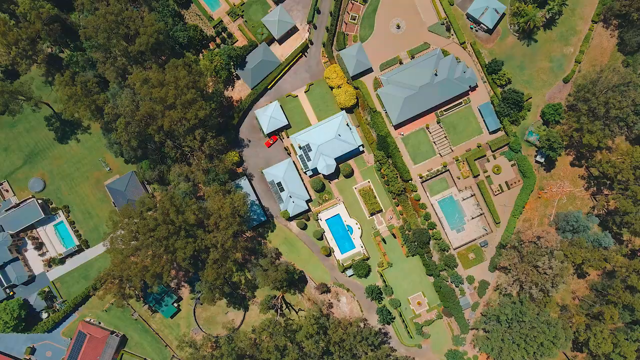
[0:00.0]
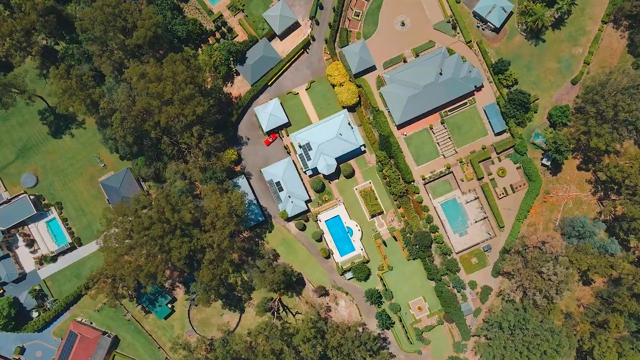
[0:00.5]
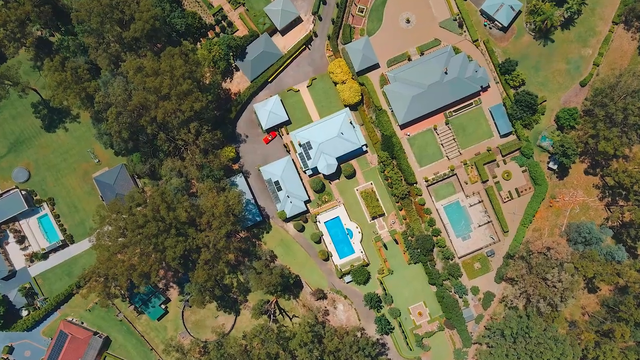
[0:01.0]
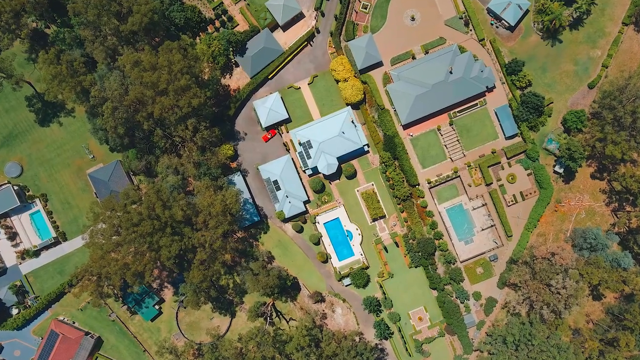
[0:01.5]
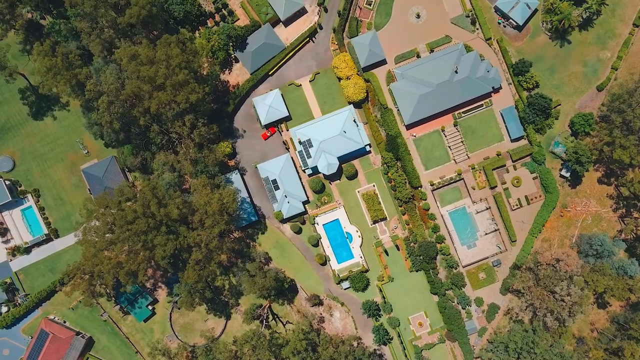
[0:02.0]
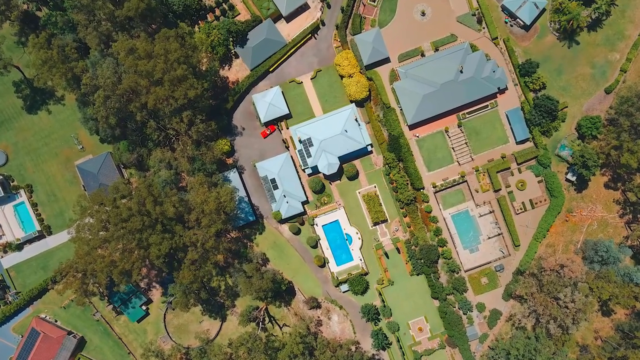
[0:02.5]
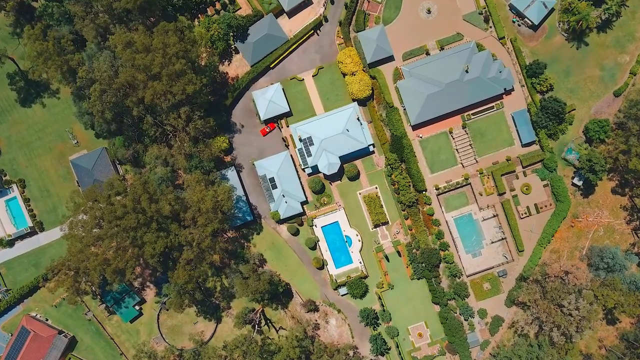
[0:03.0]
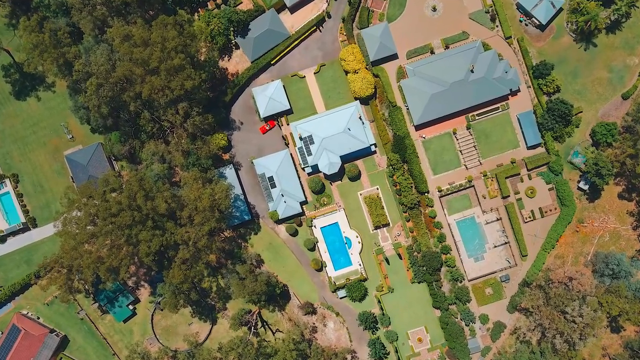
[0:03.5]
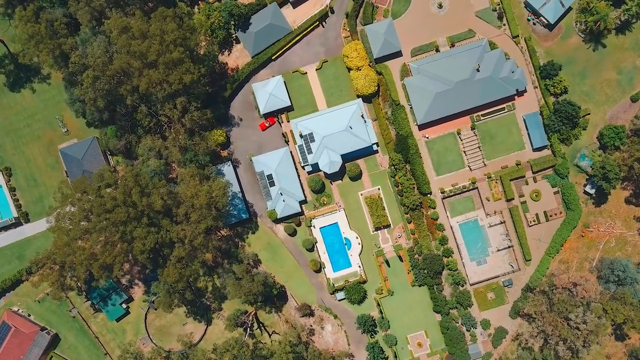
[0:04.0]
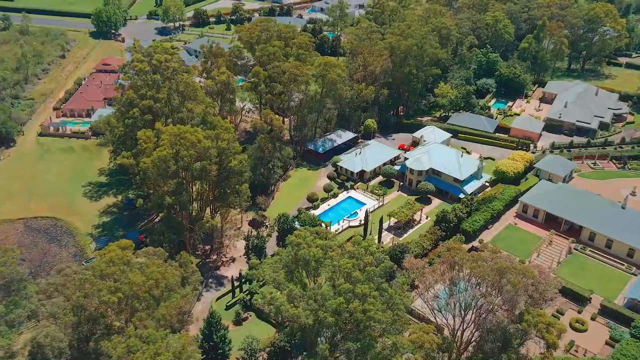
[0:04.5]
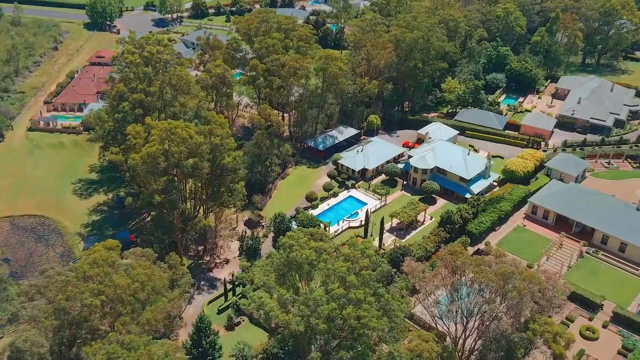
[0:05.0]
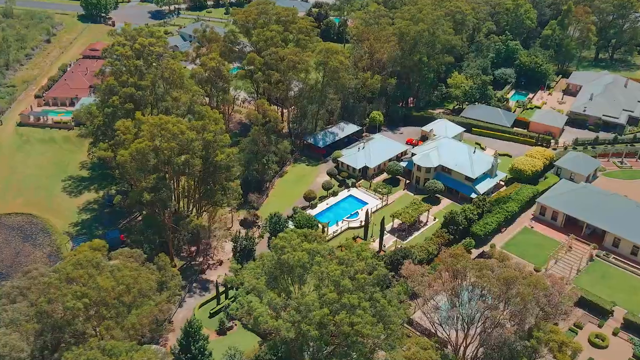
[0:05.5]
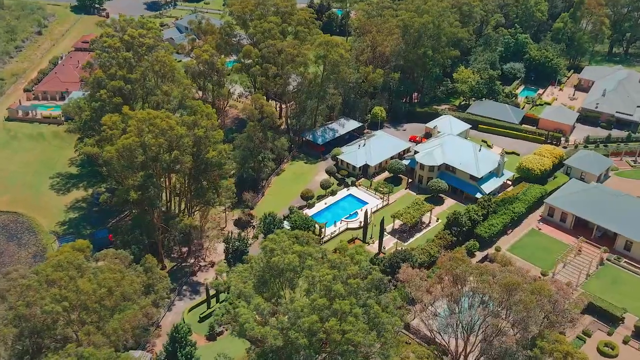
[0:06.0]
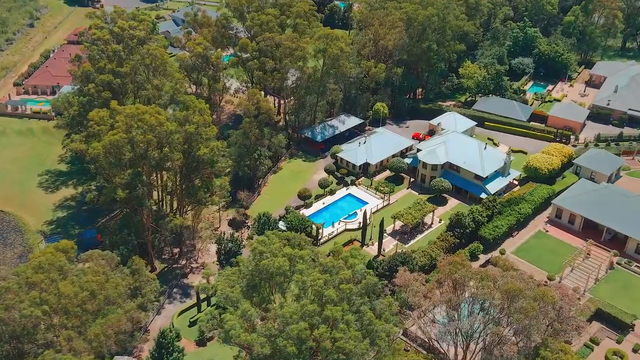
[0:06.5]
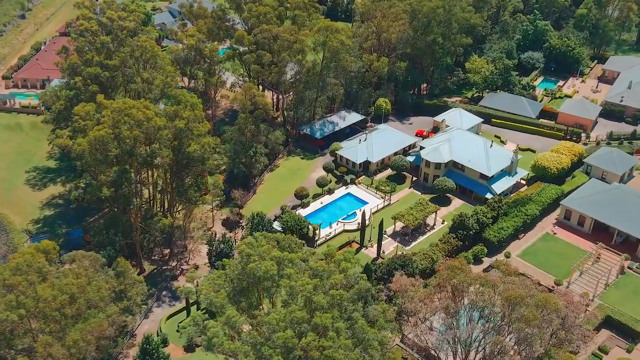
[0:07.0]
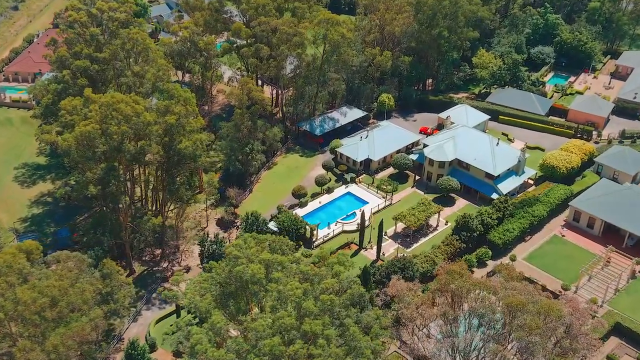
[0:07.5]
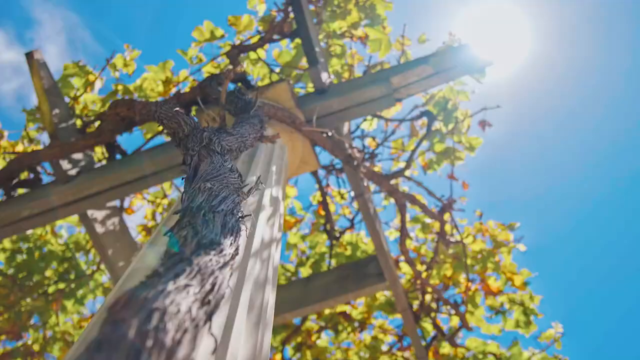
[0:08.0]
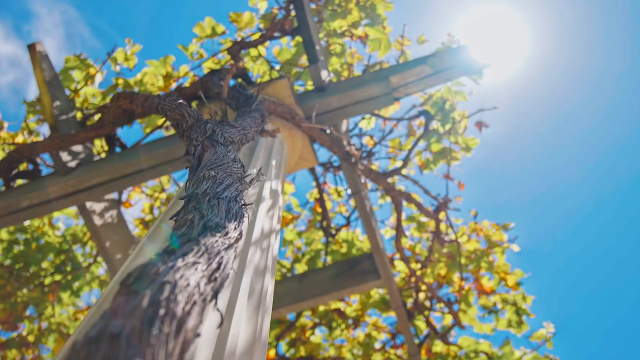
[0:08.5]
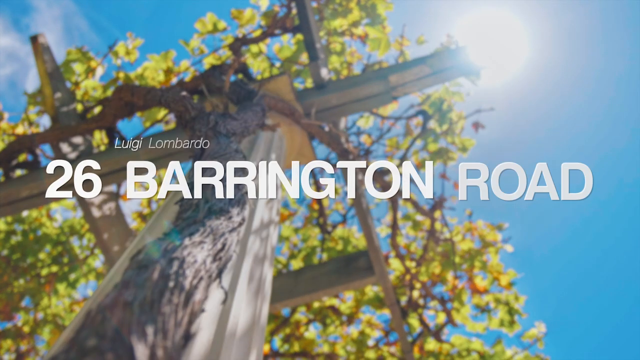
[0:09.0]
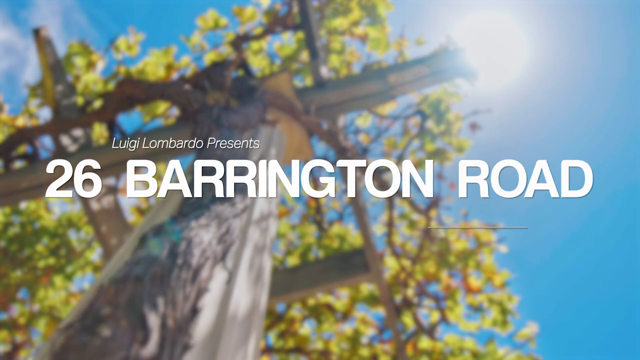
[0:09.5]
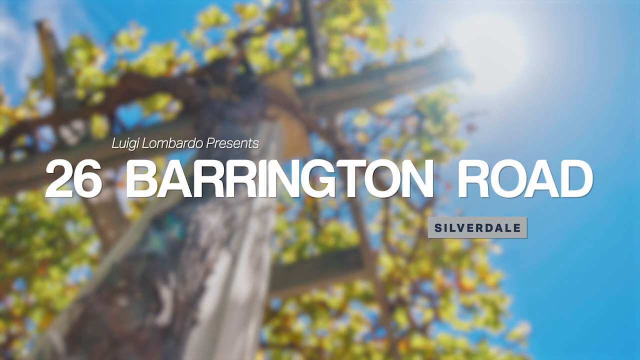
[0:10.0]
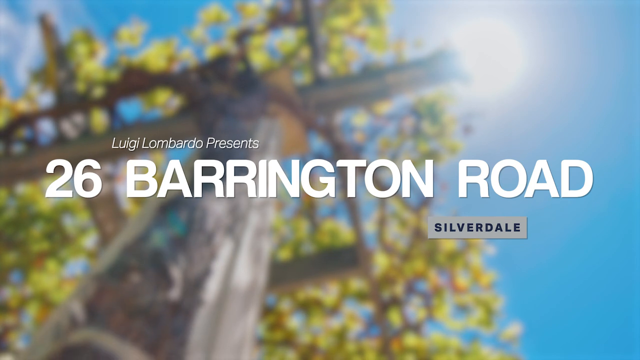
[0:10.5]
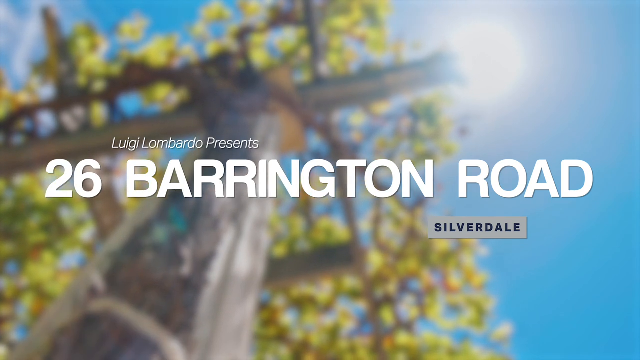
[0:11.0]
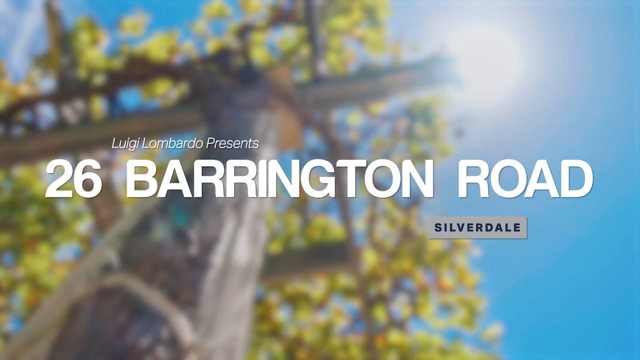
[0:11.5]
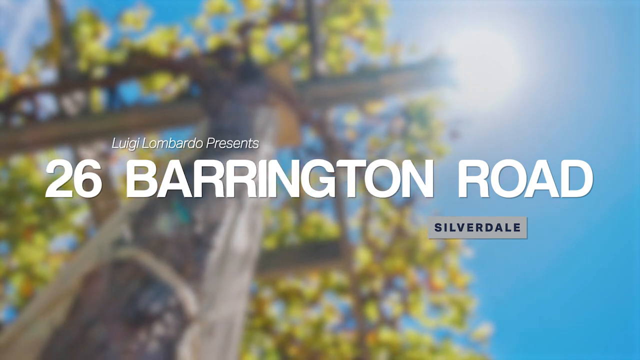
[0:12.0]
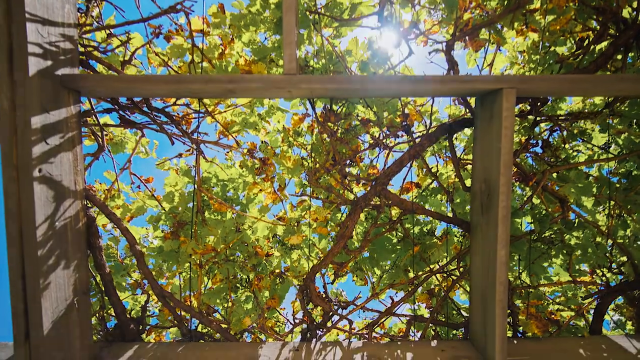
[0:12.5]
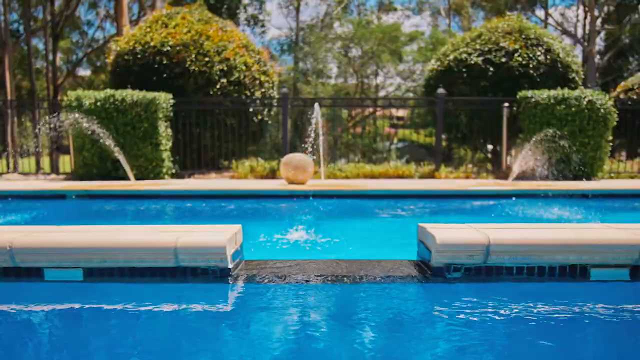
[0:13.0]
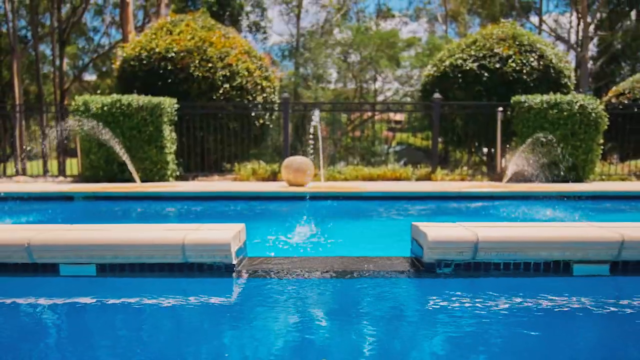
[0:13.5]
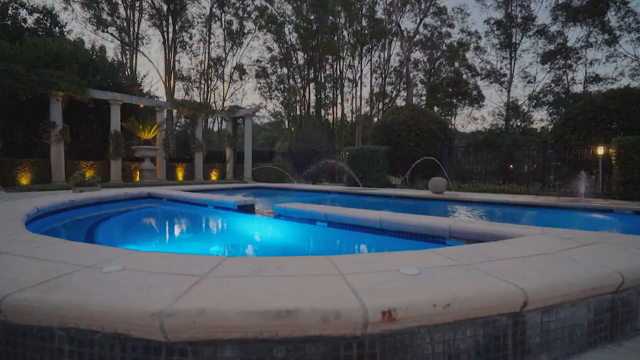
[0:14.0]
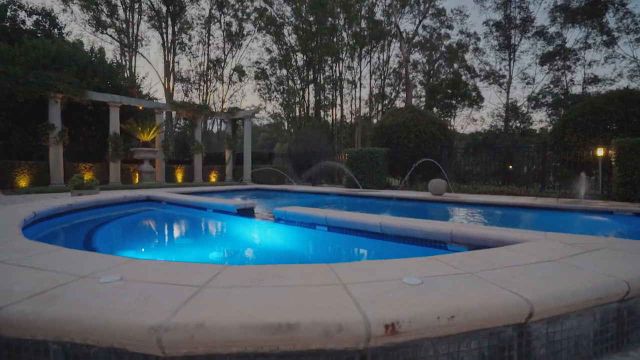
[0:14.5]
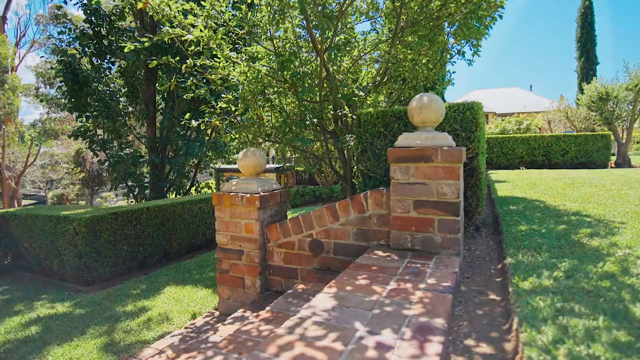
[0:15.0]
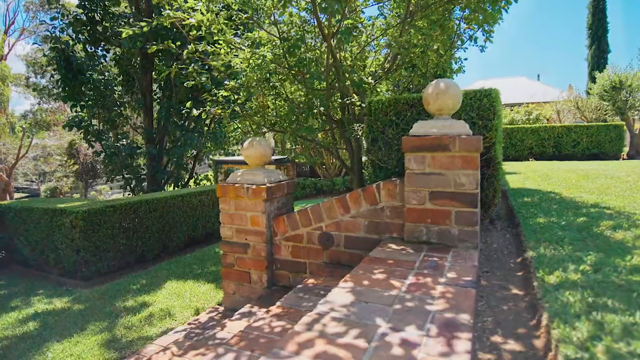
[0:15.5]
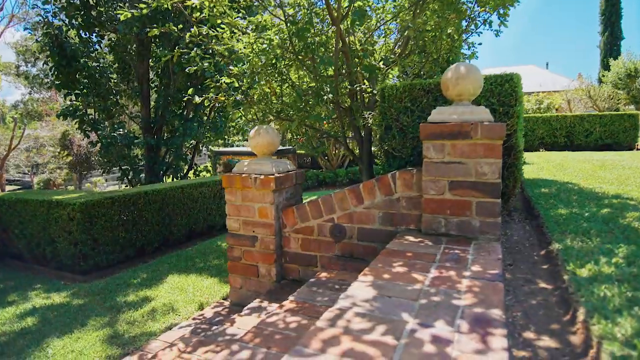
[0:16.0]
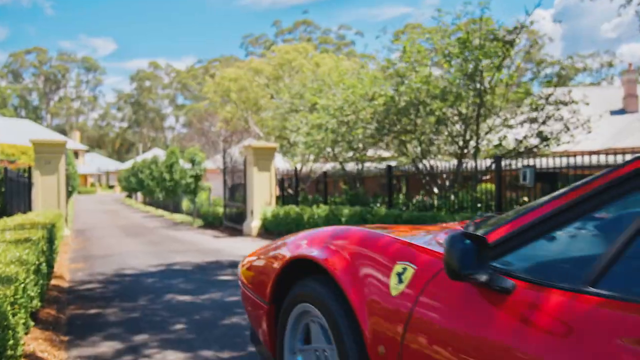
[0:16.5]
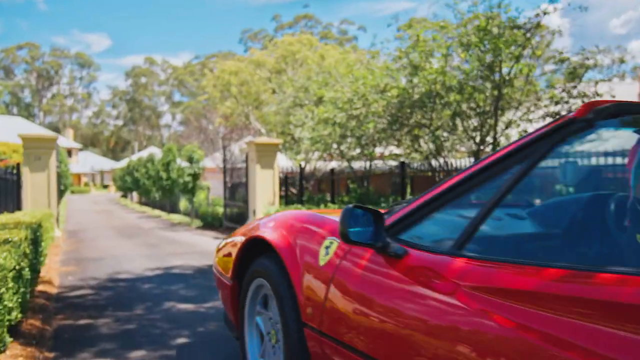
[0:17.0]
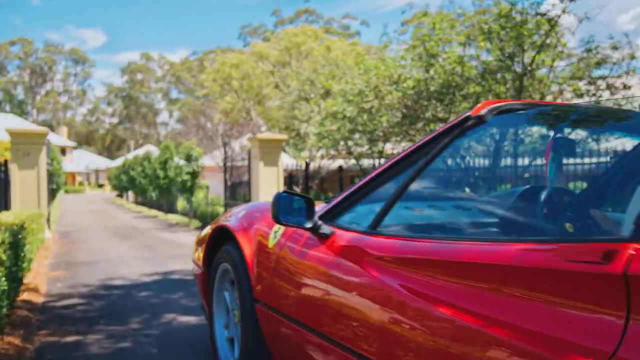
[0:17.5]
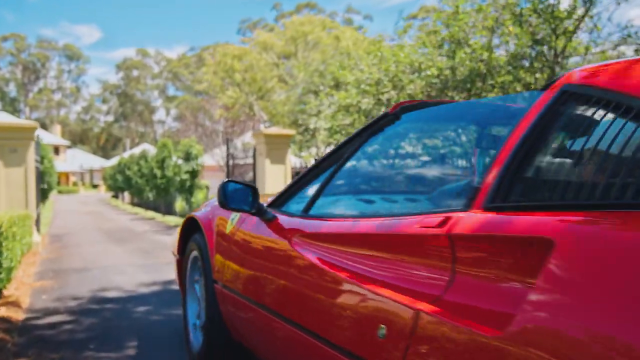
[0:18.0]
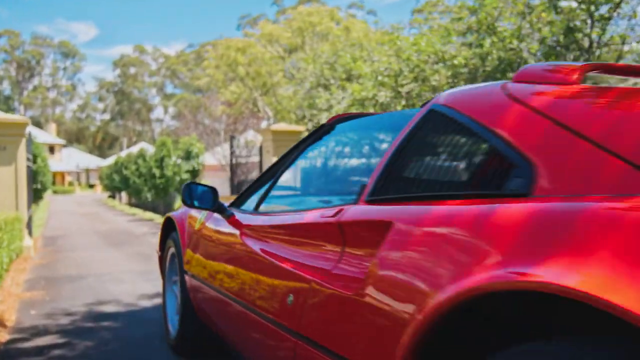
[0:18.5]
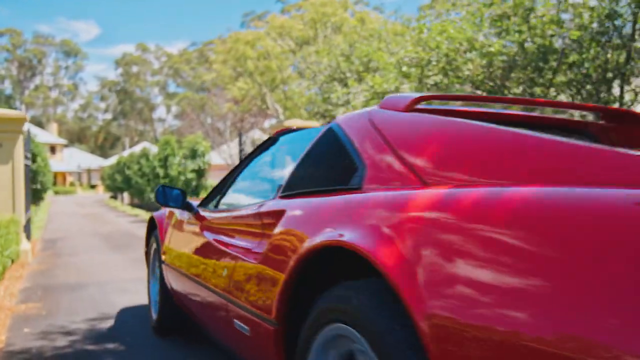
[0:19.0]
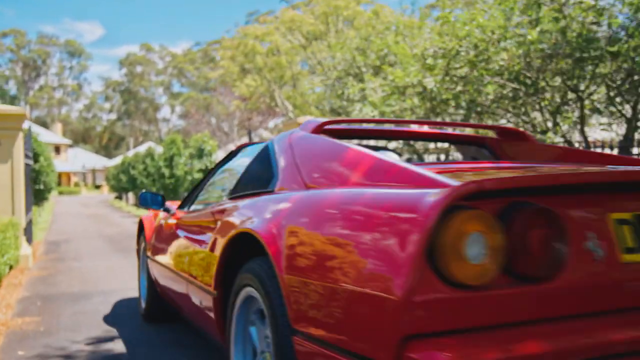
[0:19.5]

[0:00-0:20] The video opens with an overview of a neighborhood, starting with at least two homes in the center of the frame. Both have rectangular, fairly modern pools. They have artificial grass in the backyard and front yard, surrounded by a lot of real greenery such as trees and bushes. The house in the middle appears to have an area that looks almost like a courtyard, and the house to its right has a sitting area, almost like a garden, next to the pool. The view zooms in further, and then another shot shows what apparently is the same house. A title introduction reads "26 Barrington Road." A couple of shots show the pool and the yard area, followed by a red Porsche. The area looks wealthy.